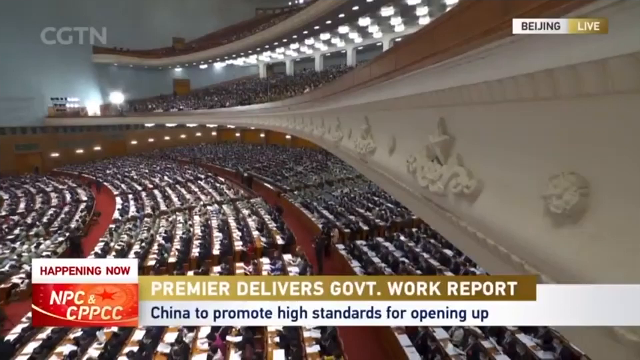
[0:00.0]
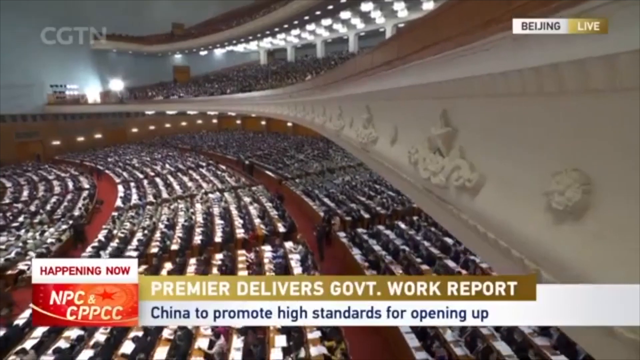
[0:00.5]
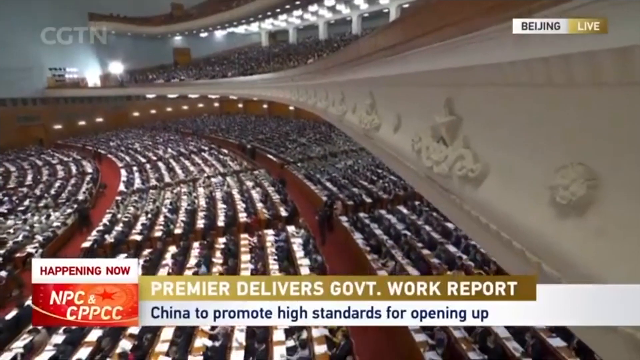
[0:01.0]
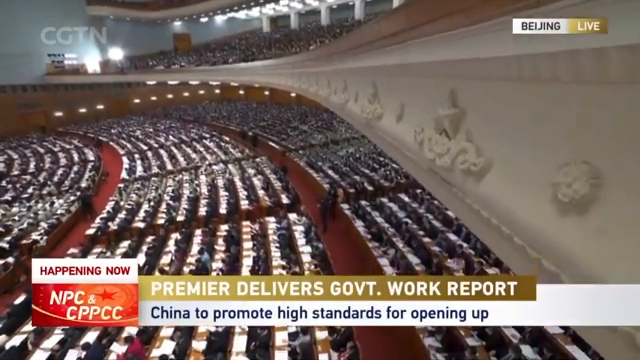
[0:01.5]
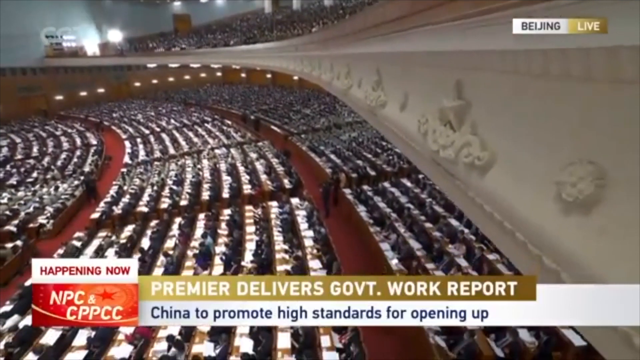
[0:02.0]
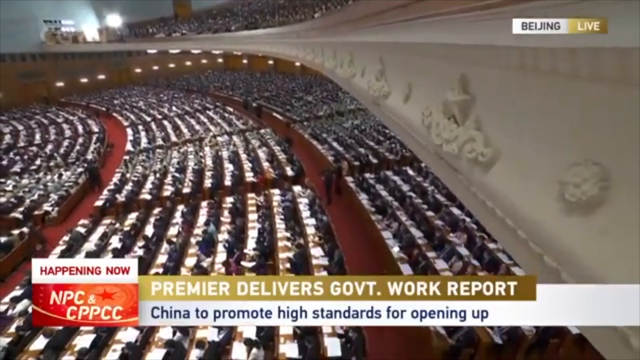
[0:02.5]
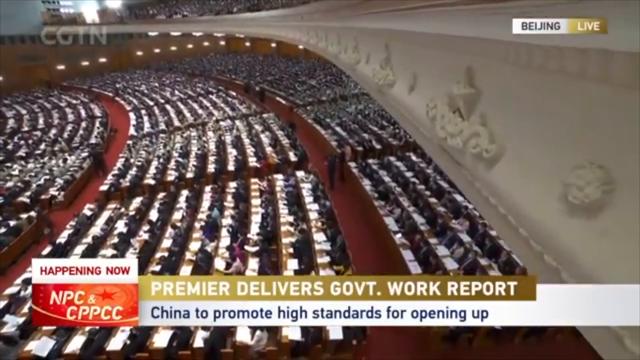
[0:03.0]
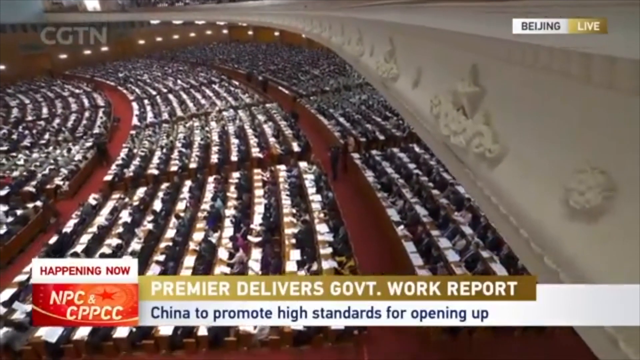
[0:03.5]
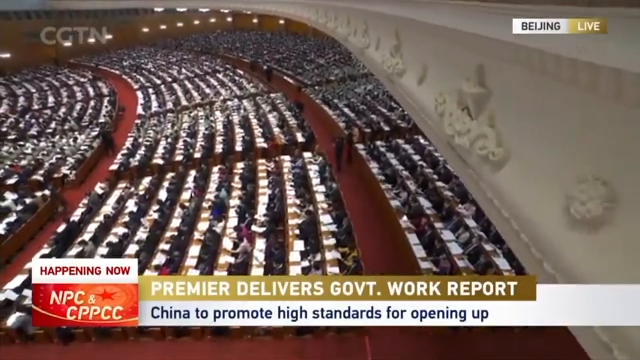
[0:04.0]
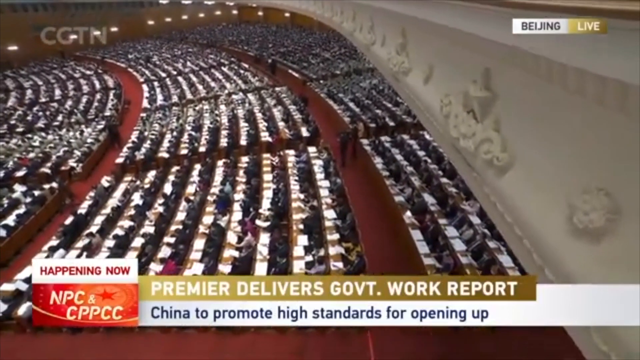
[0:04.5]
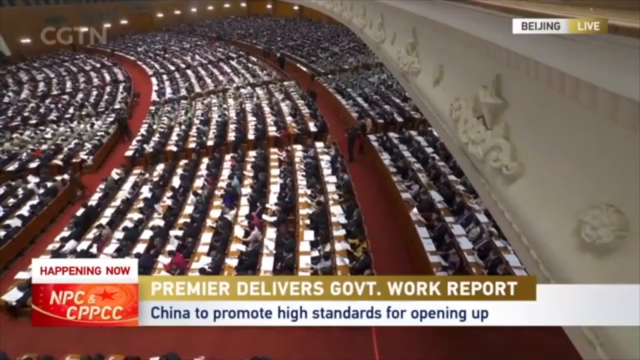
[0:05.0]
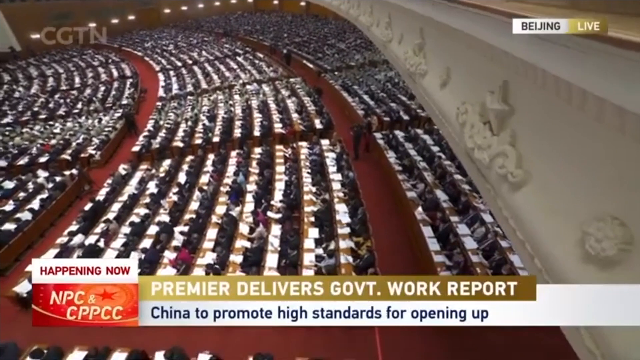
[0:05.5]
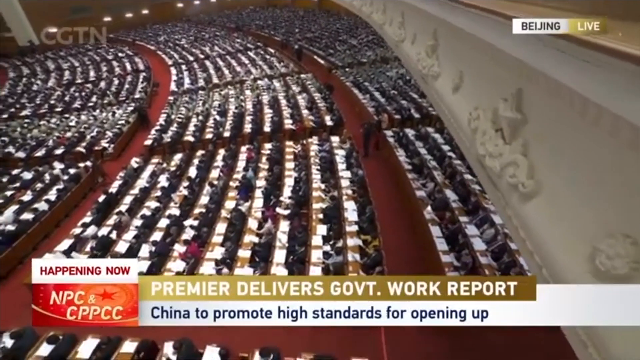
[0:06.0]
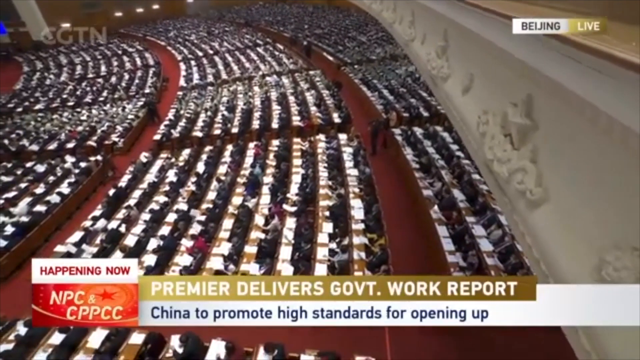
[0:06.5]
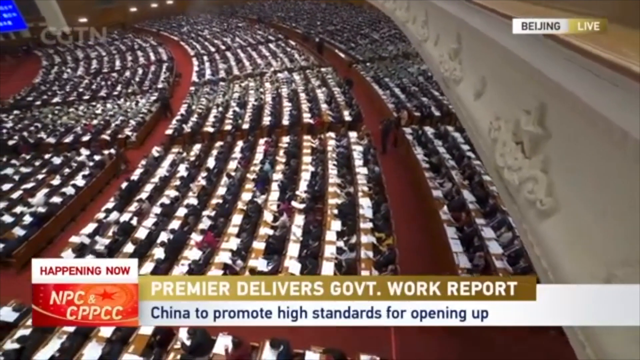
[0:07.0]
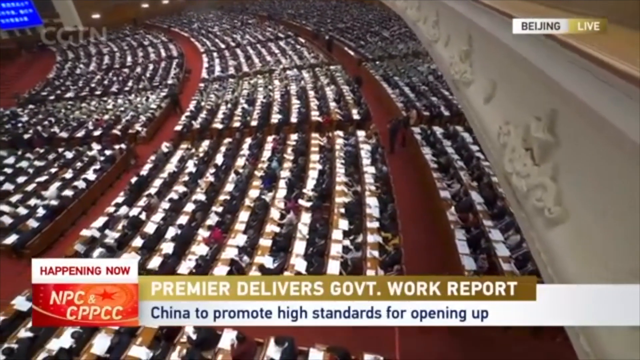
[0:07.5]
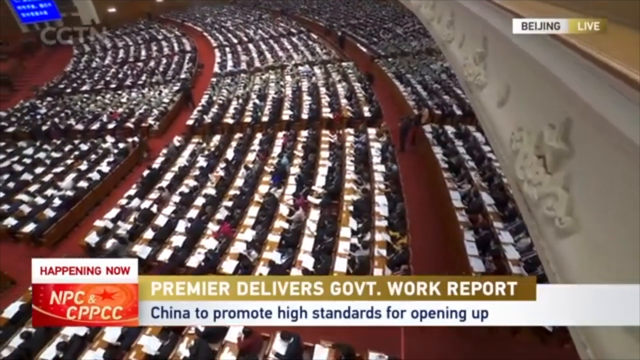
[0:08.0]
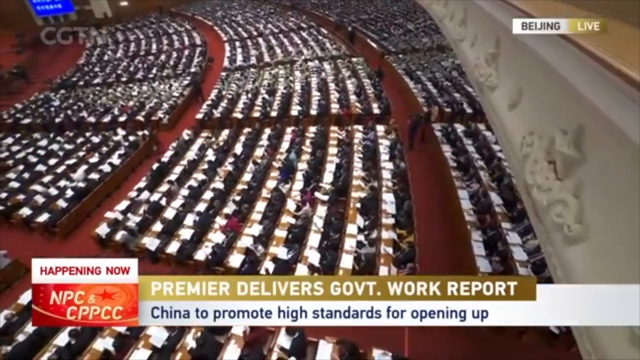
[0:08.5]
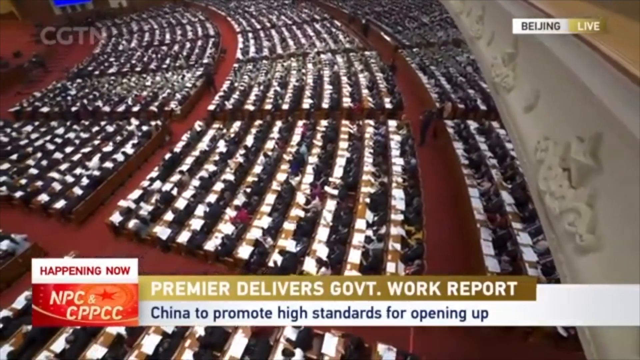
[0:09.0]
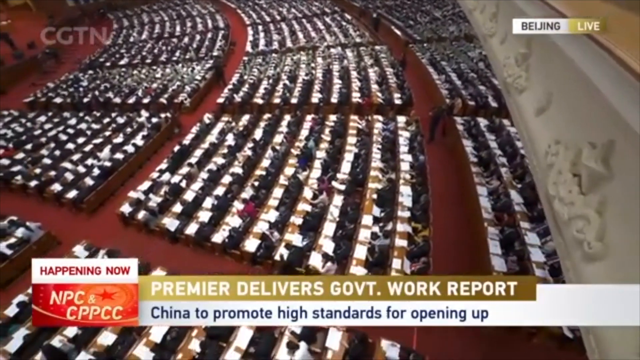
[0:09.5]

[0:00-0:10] This appears to be a news story from a Chinese news outlet. The view looks down from above on the parliament or some type of government in Beijing, where there appear to be hundreds of people lined up in a half-arc. A live callout in the top right reads "Beijing" in black and "live" in white. A lower-third callout at the bottom reads "Premier delivers government work report" with "China to promote high standards for opening up" underneath.